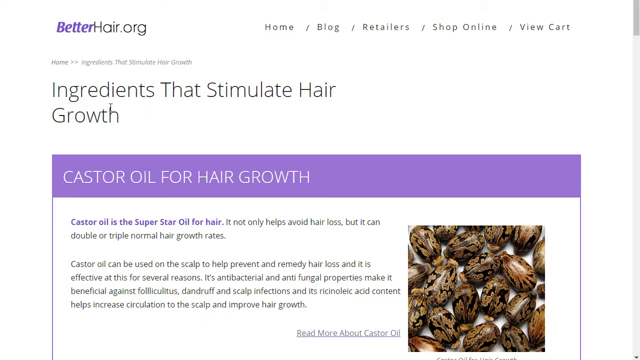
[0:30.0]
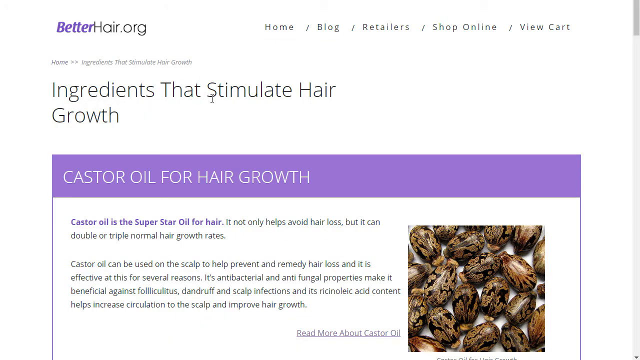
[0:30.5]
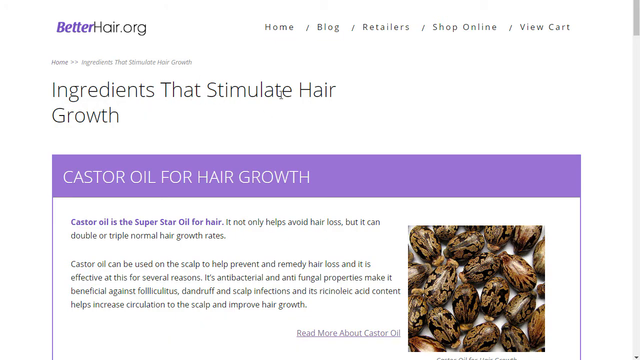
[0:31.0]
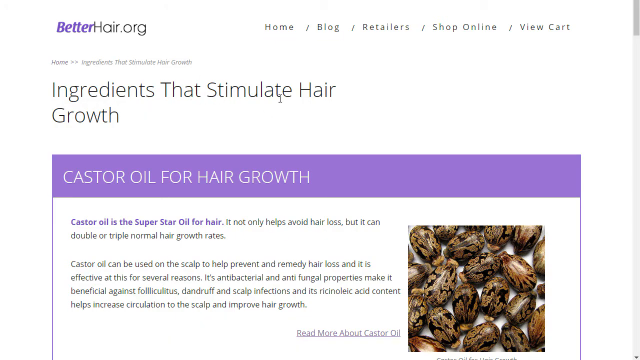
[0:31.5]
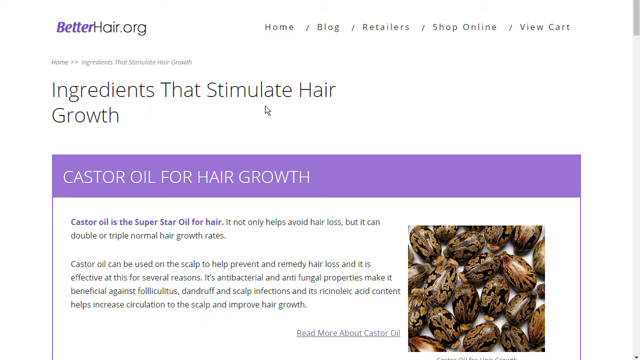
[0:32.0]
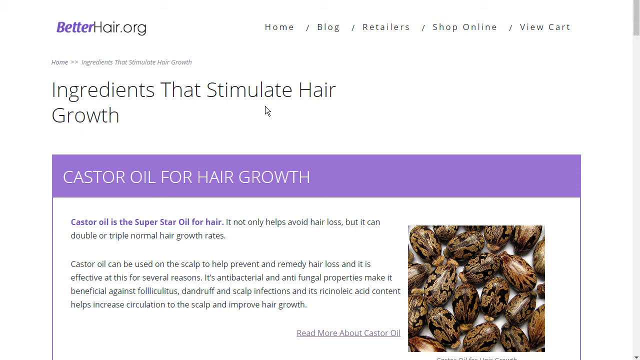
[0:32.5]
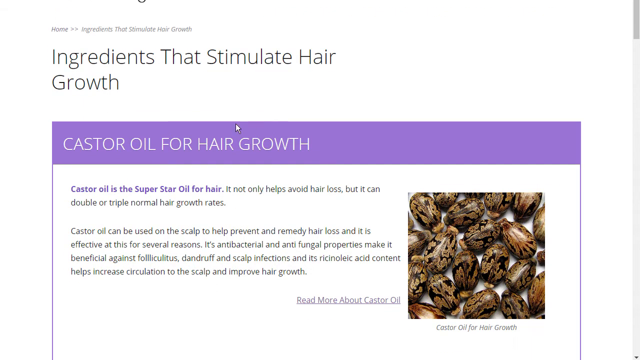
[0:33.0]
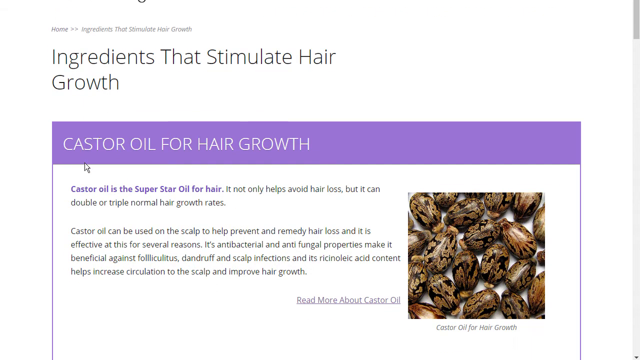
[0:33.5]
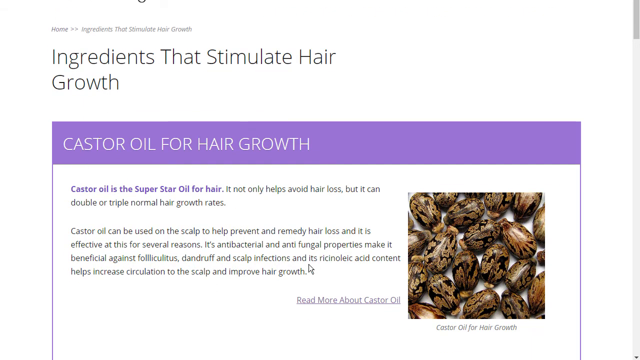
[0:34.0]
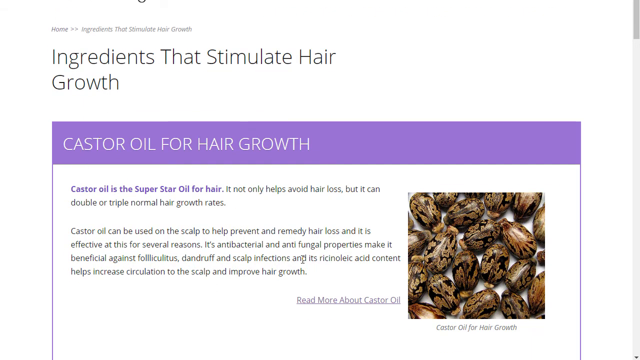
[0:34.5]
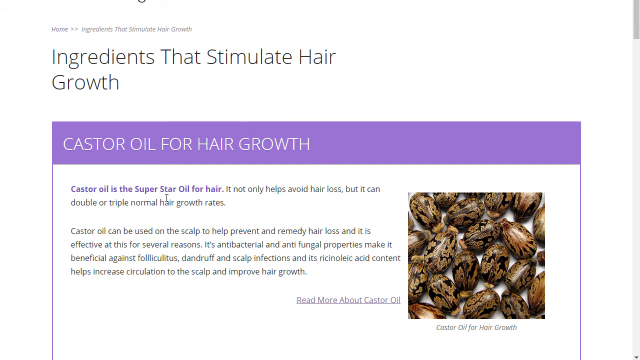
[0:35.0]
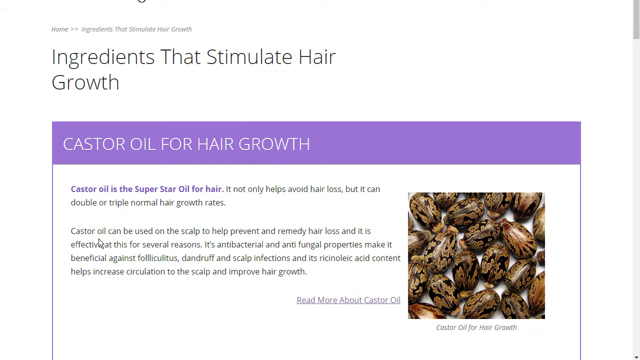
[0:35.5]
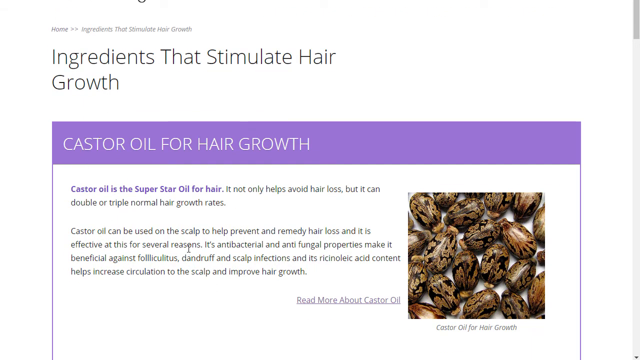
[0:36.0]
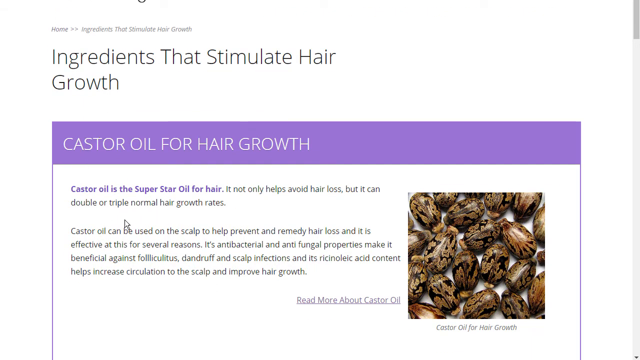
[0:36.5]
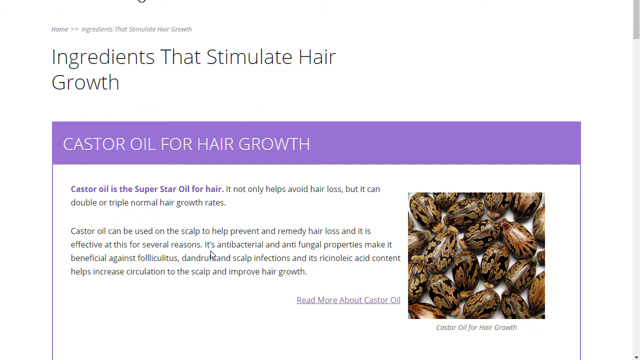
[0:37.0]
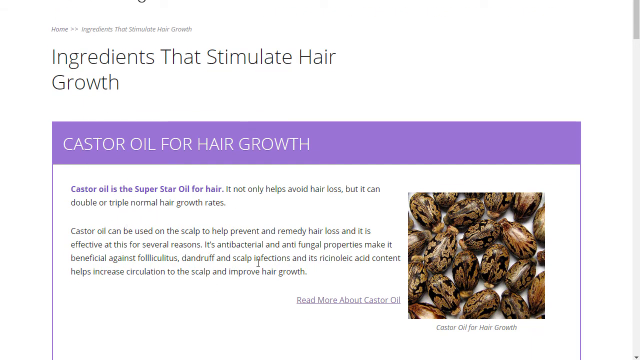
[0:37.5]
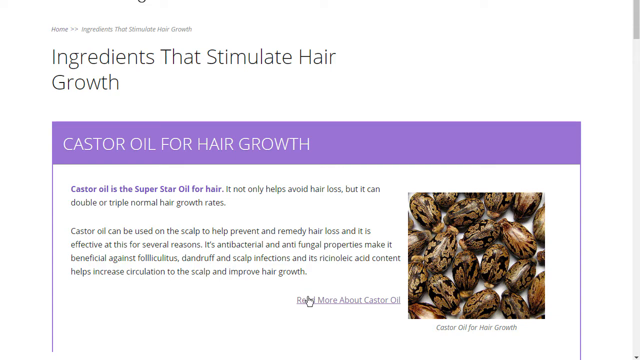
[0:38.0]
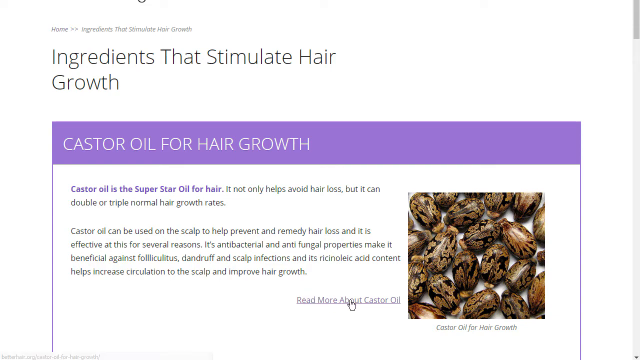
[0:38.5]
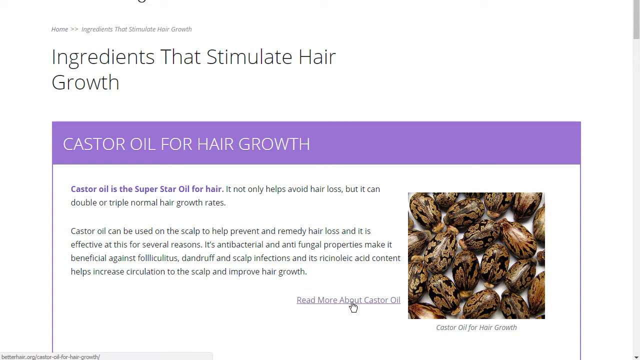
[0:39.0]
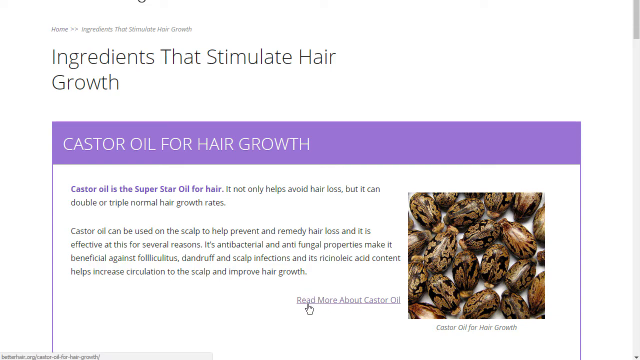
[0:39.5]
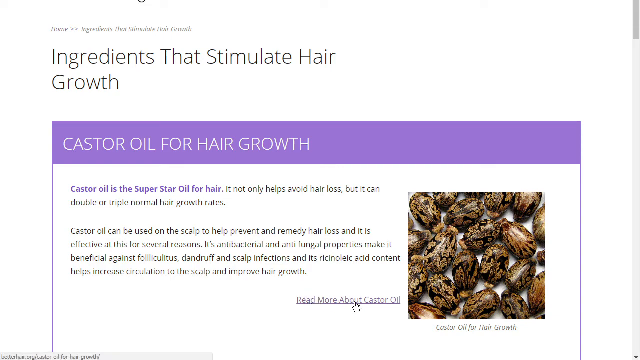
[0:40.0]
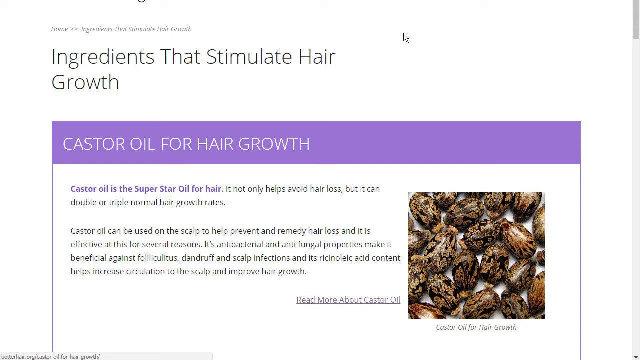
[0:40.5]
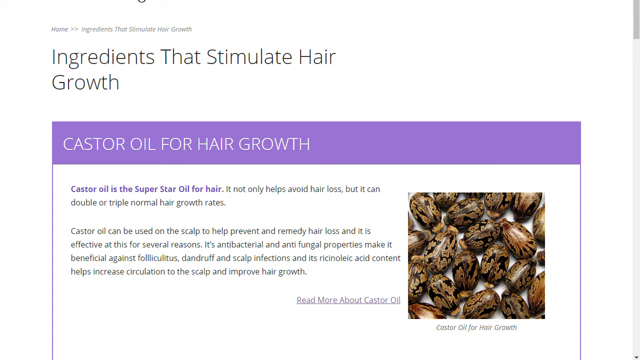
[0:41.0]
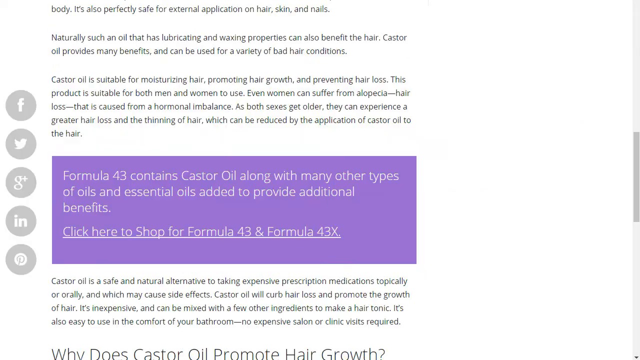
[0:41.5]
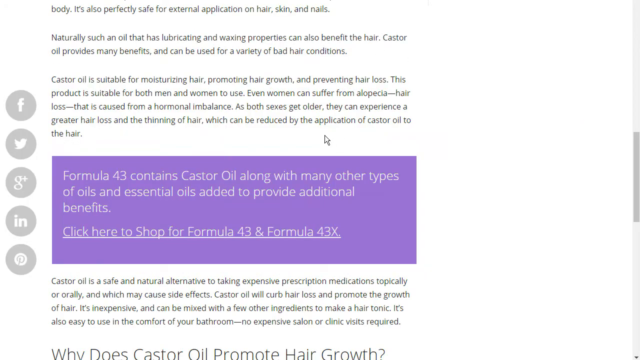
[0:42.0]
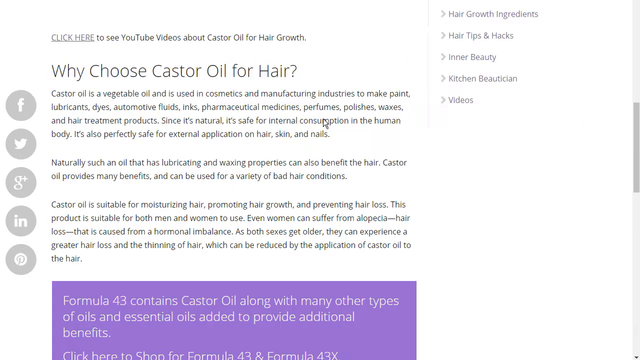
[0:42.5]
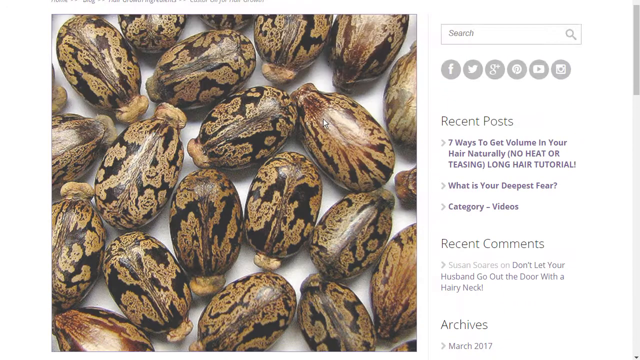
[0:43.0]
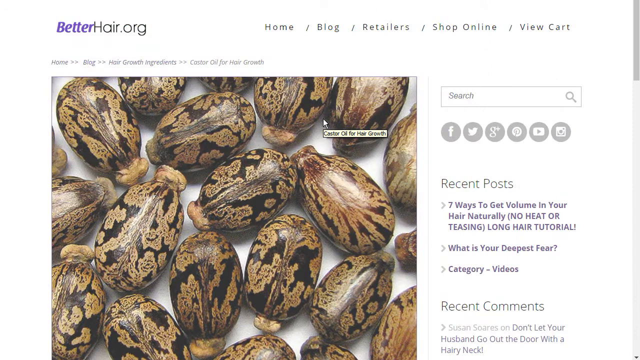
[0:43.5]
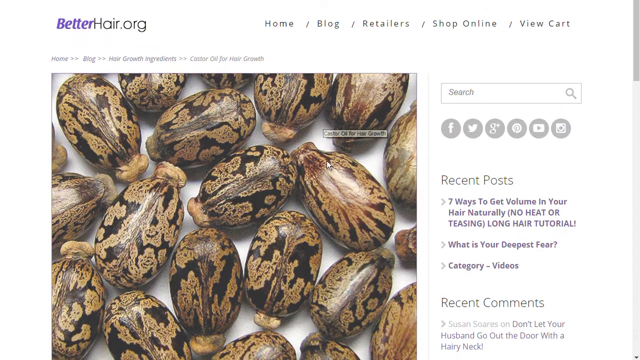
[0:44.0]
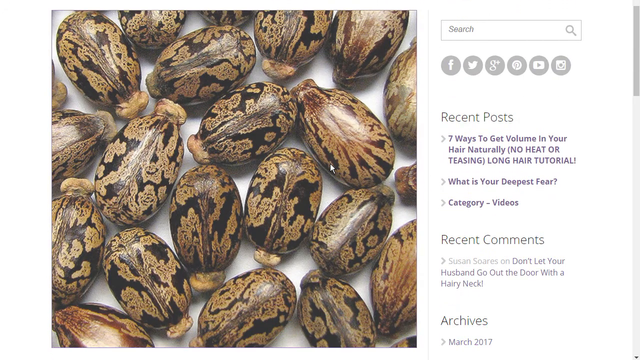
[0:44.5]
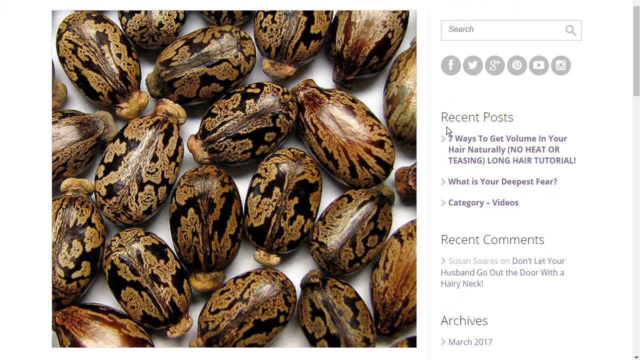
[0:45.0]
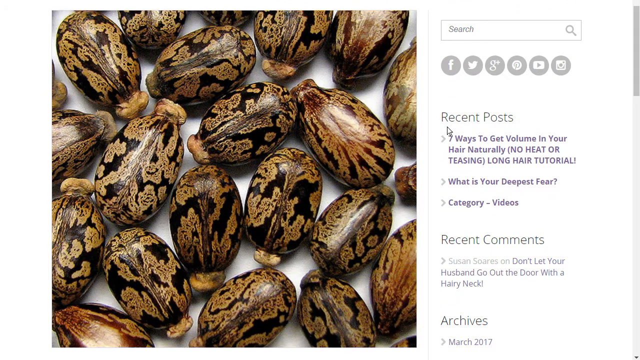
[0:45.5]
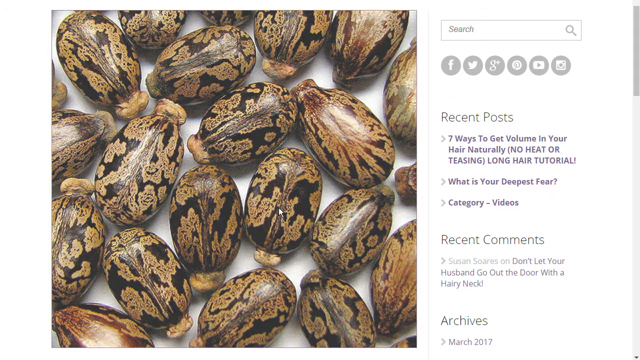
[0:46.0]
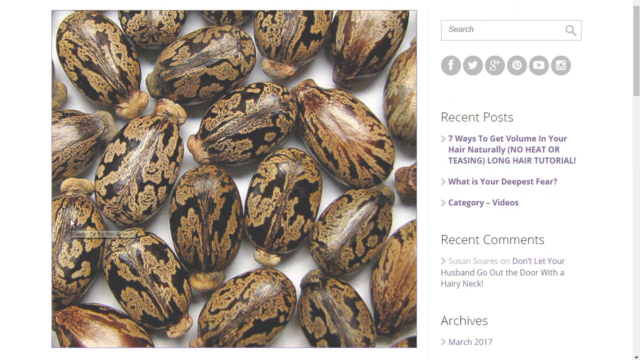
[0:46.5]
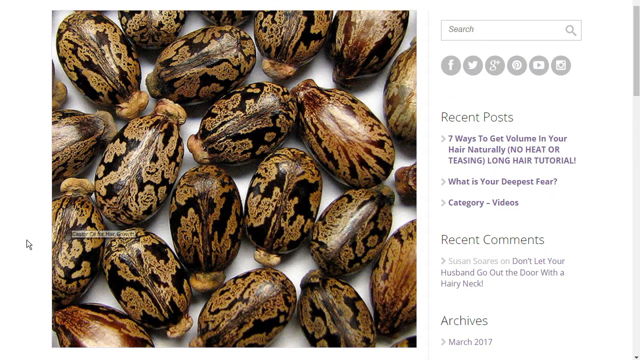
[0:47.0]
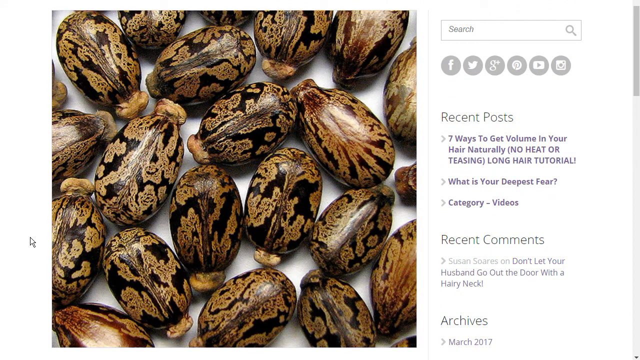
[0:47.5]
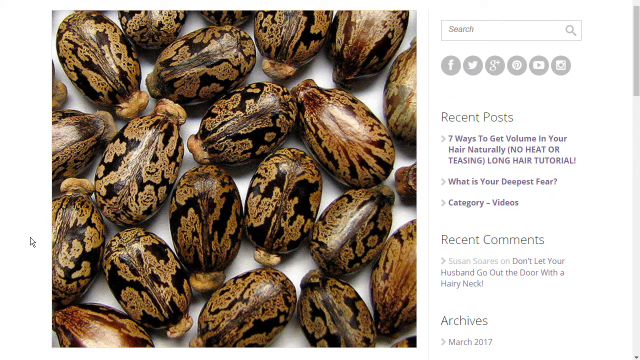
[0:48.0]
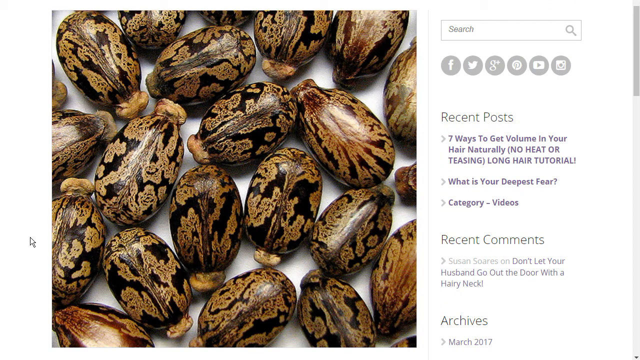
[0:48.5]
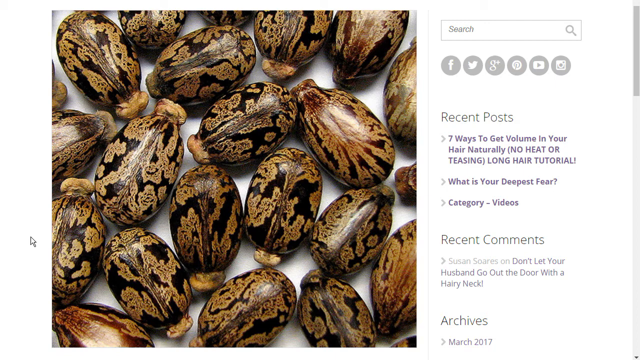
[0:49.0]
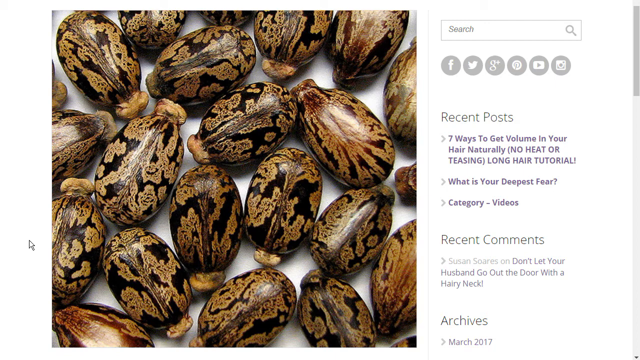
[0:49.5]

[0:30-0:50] The article on the betterhair.org website is still shown, with the heading "ingredients that stimulate hair growth." Just below the heading are the words "castor oil for hair growth" in a white font on a purple background. The article focuses on using castor oil to grow hair, and a snippet reads "castor oil is the superstar oil for hair. It not only helps avoid hair loss, but it can double or triple normal hair growth rate." The cursor hovers over a few words in the article and then goes to a link that says "read more about castor oil." The view switches to an image of what appears to be some type of plant, and the cursor seems to hover over this image of the unidentified plant.